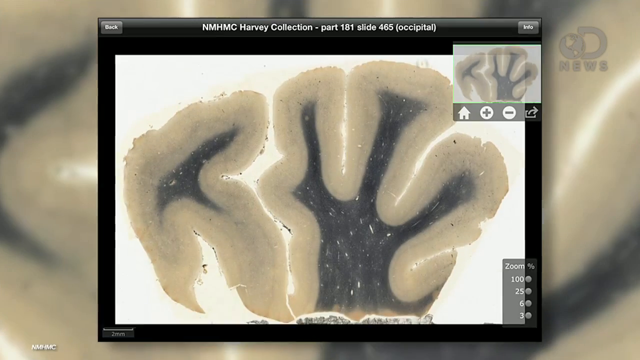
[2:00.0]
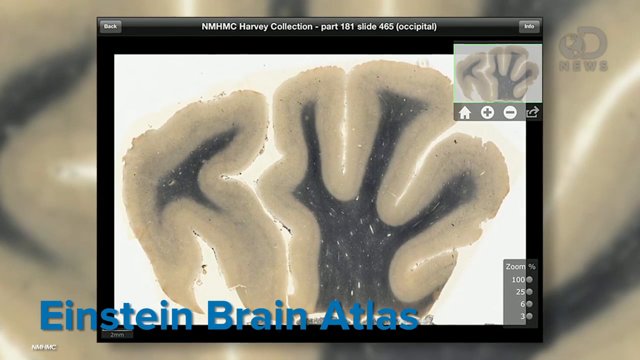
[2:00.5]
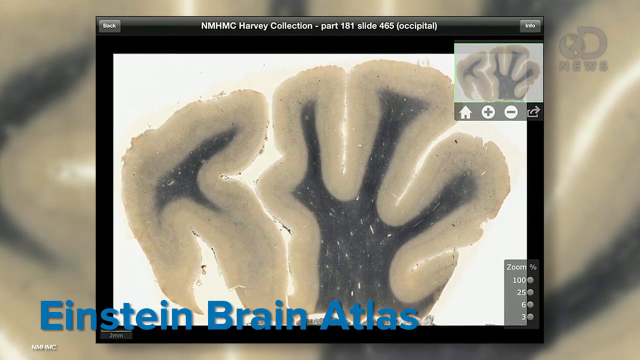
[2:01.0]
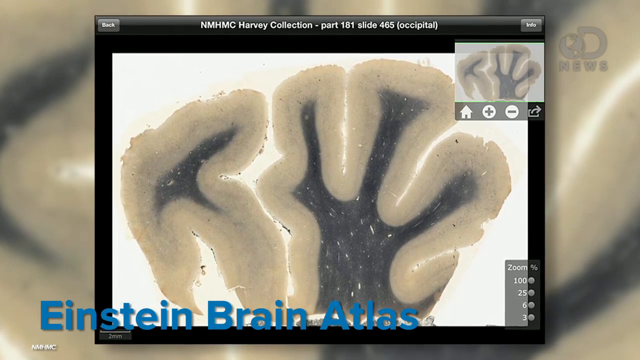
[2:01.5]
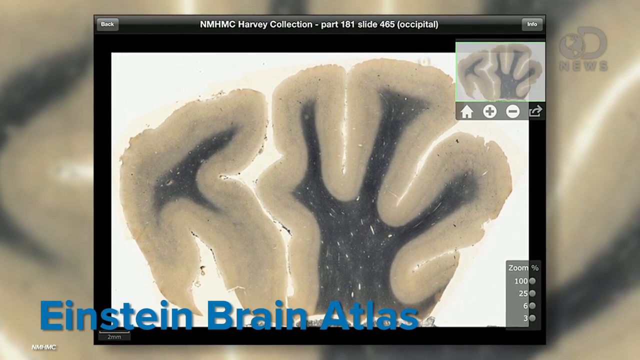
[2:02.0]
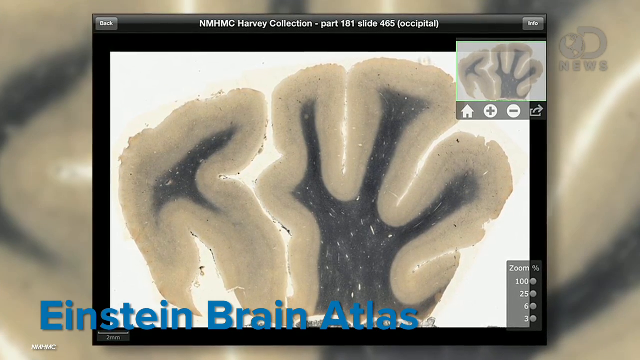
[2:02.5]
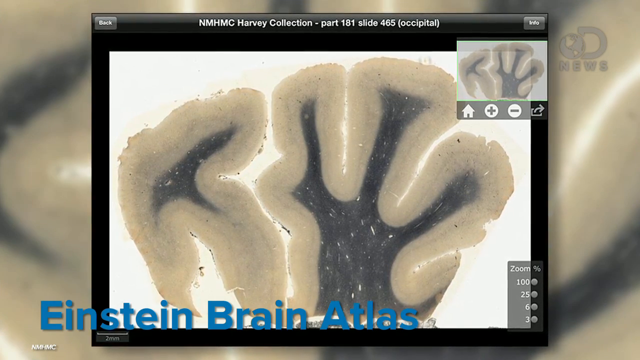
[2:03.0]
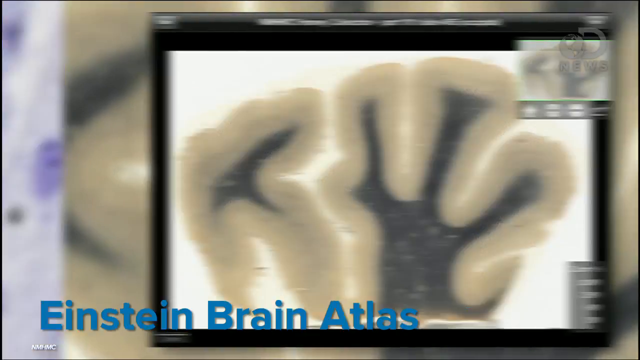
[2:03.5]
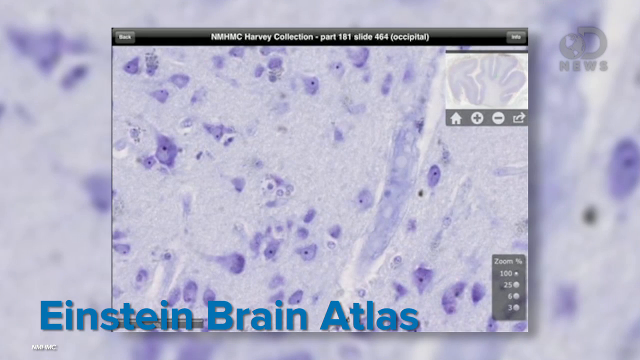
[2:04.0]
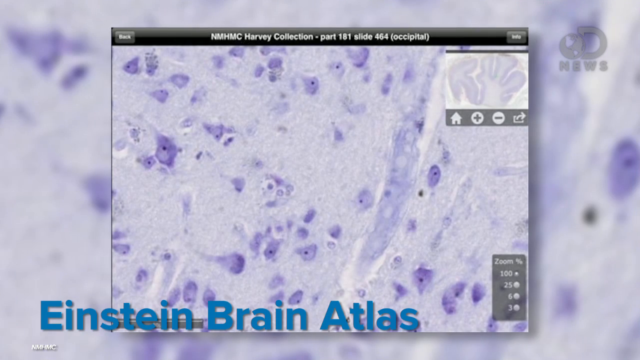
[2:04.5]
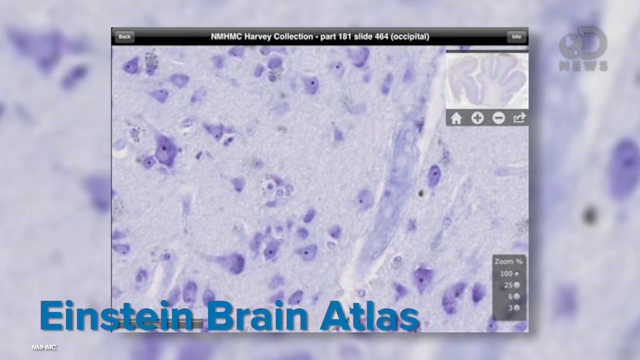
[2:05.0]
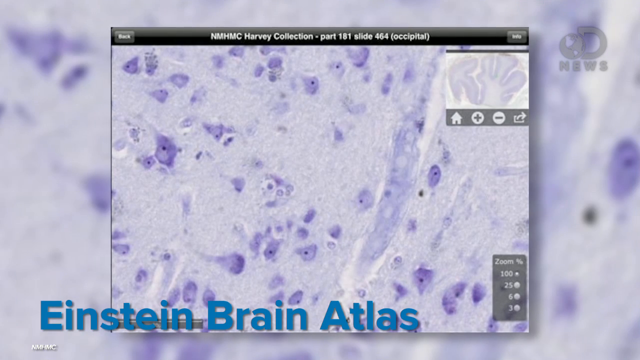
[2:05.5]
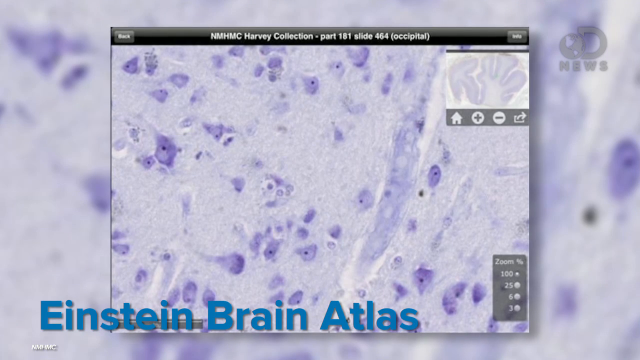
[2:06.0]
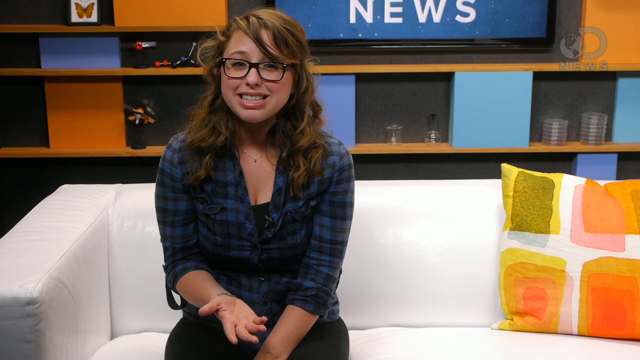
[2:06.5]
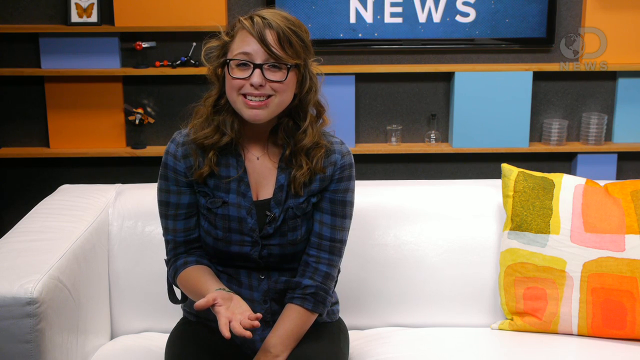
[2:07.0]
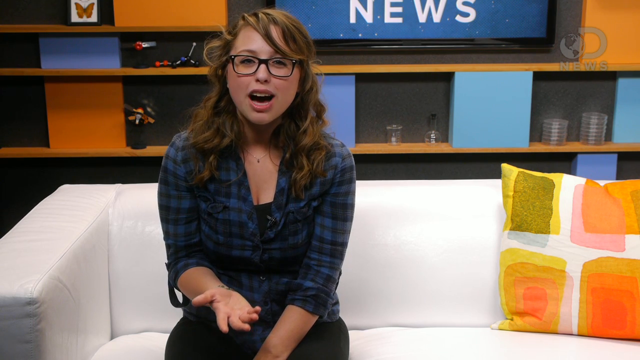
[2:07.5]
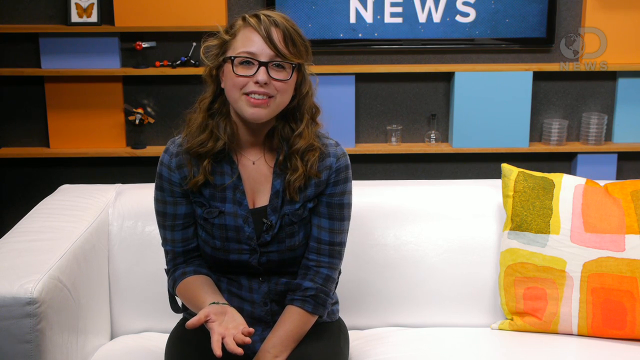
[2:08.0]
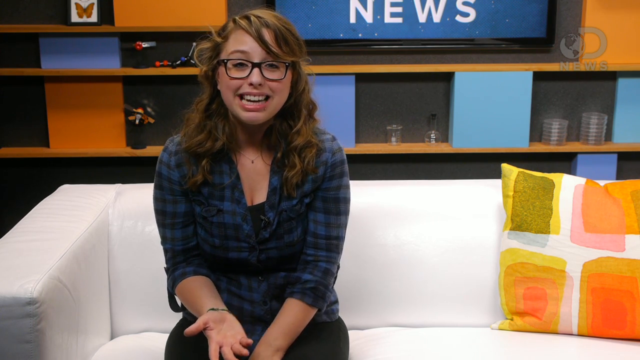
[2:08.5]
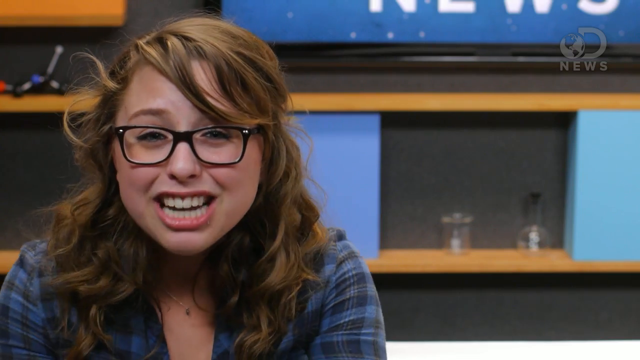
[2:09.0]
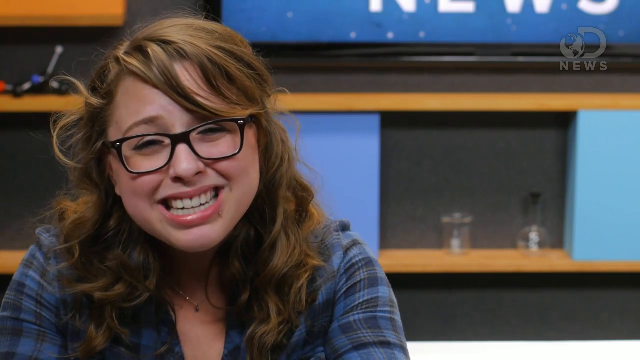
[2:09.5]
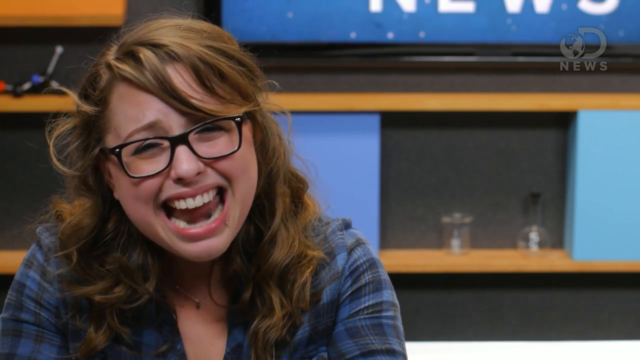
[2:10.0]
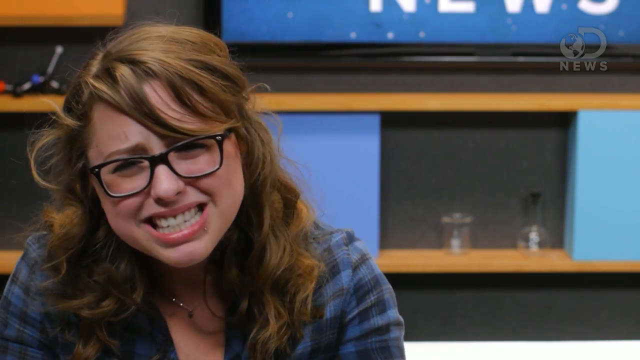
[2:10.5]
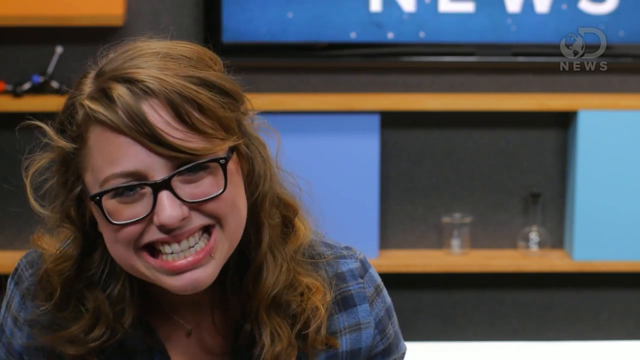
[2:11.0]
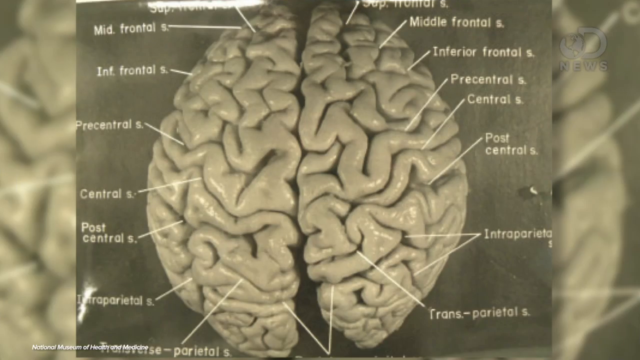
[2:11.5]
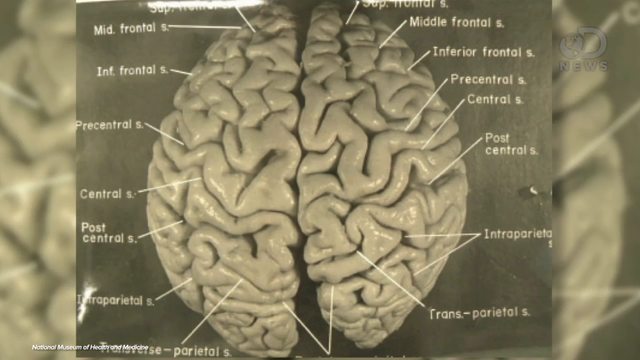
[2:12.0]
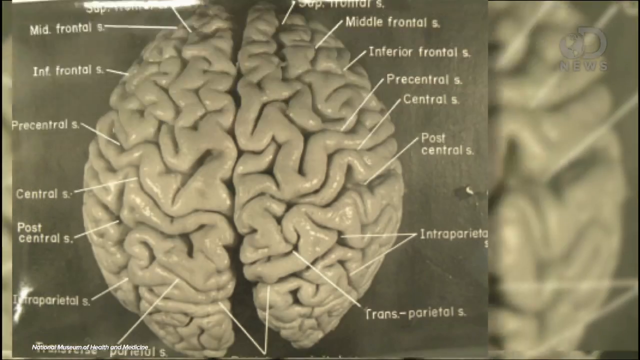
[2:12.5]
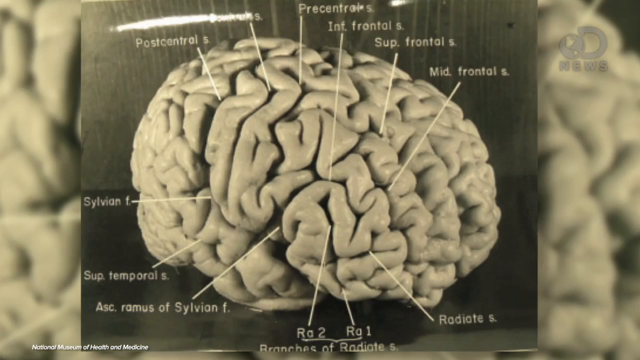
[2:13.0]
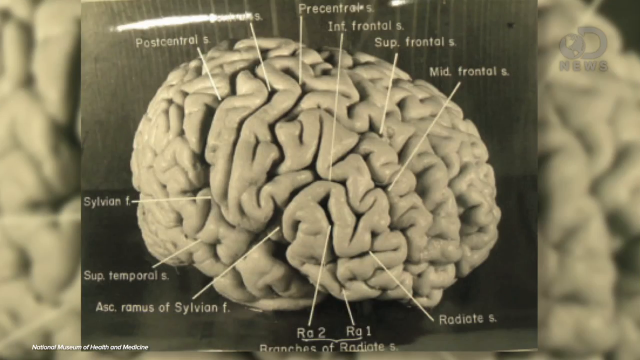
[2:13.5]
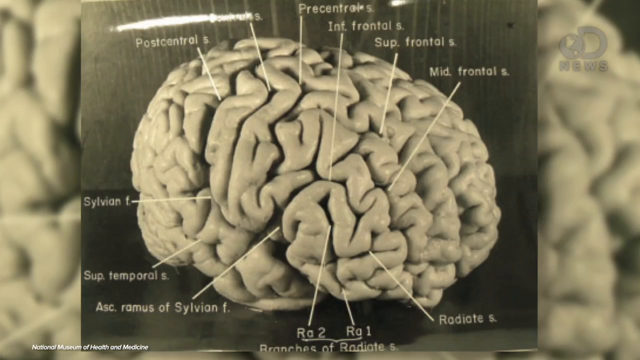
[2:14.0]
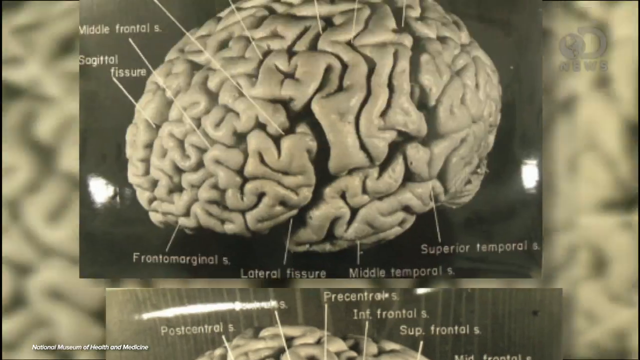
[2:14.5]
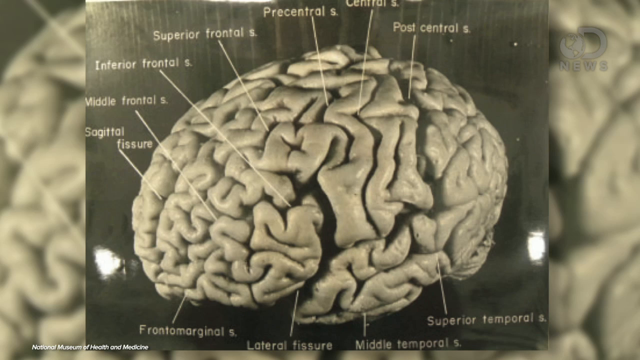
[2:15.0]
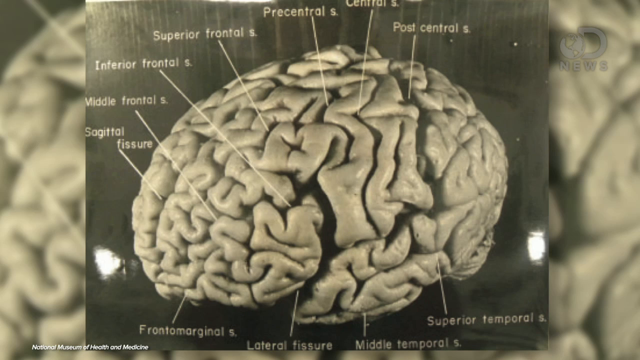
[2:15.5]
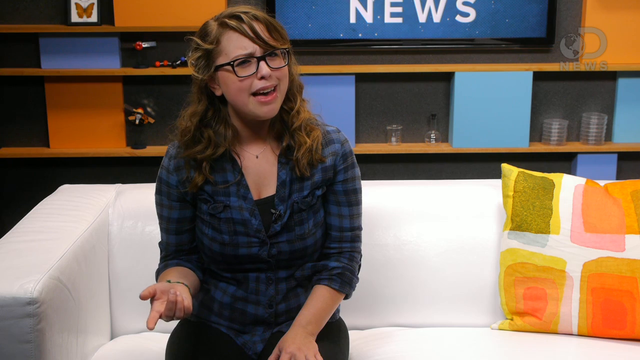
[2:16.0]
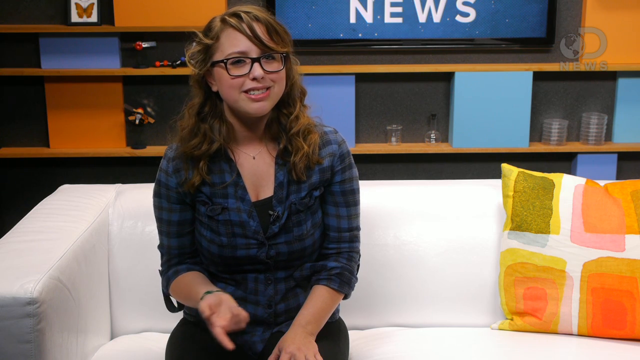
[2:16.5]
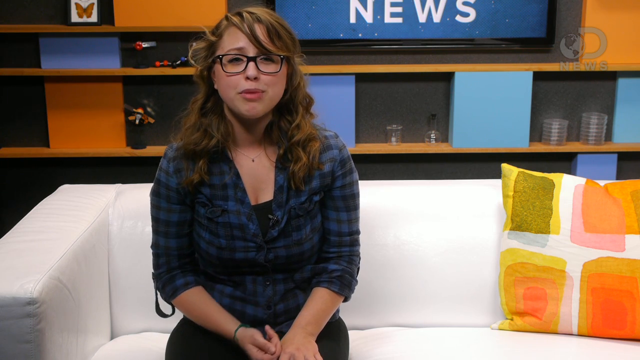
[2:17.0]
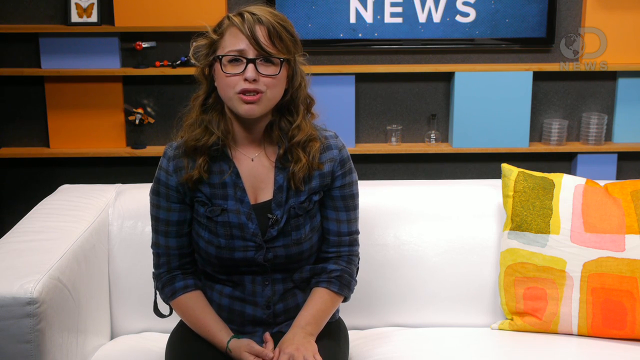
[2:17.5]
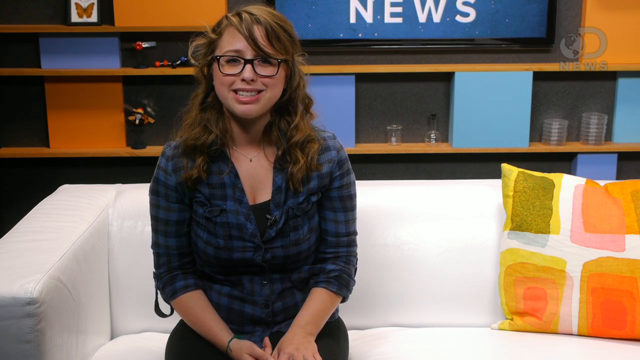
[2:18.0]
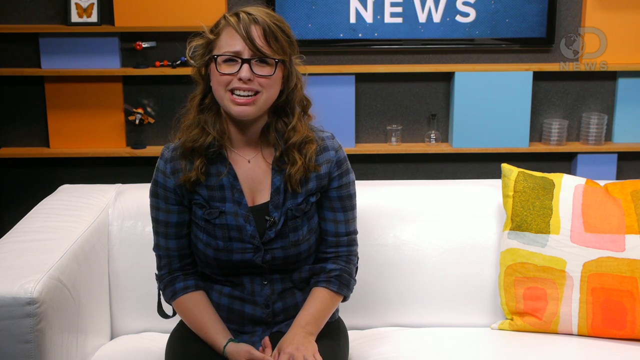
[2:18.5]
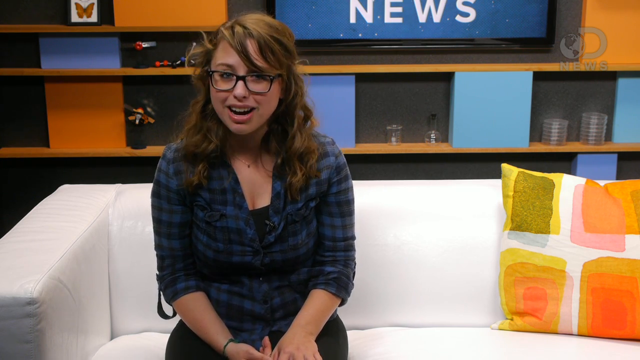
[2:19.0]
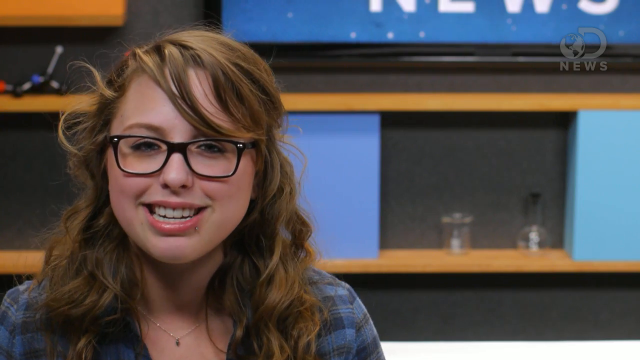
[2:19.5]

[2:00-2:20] A section of what is maybe someone's brain is shown with the text "Einstein brain atlas". More pictures come up, including a model of a different brain that looks like it could be plastic, with lots of lines coming out of it and words next to them labeling each part of the brain. Pictures show a side cut of Einstein's brain, with some crystals and purple colors in the middle. The view cuts out to the same woman, sitting on a white couch and talking. She wears black glasses, smiles, and has brown shoulder-length curly hair.